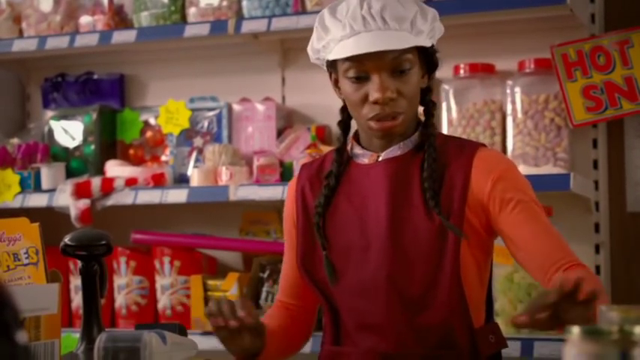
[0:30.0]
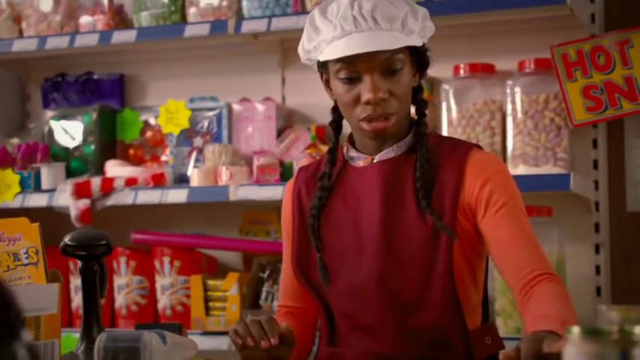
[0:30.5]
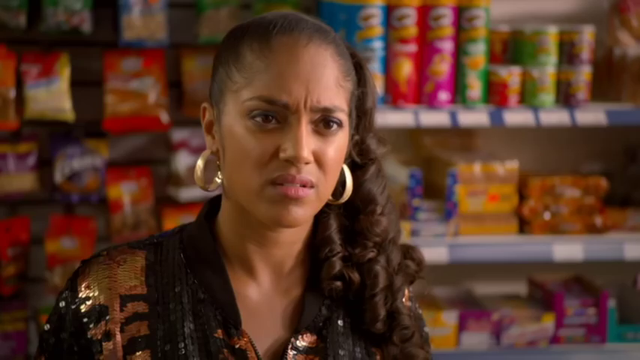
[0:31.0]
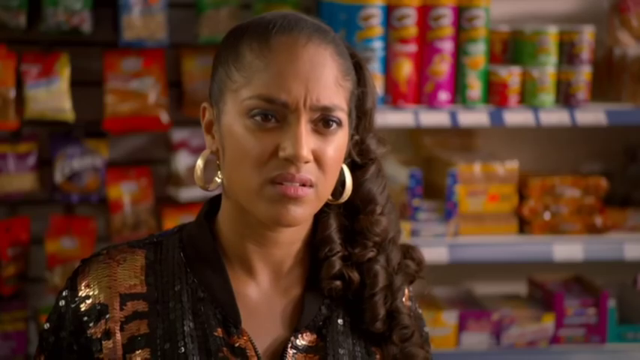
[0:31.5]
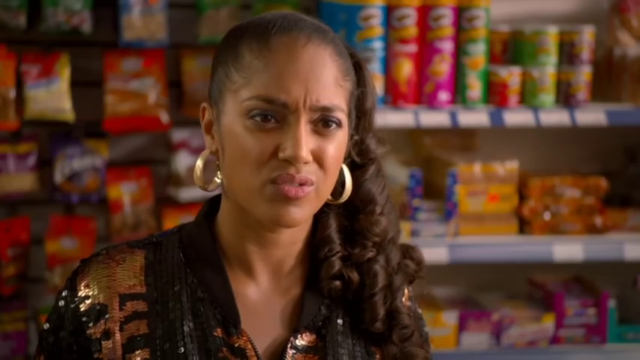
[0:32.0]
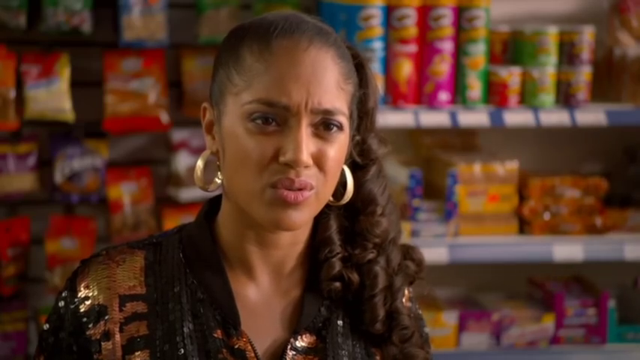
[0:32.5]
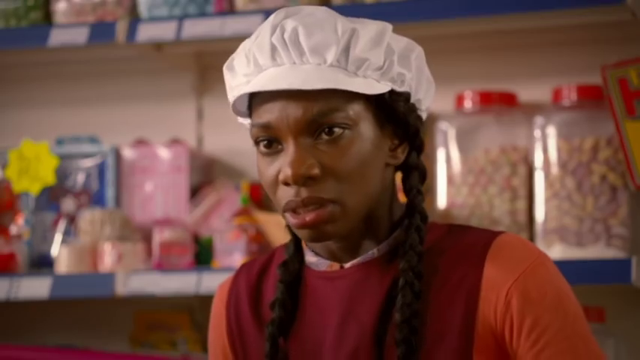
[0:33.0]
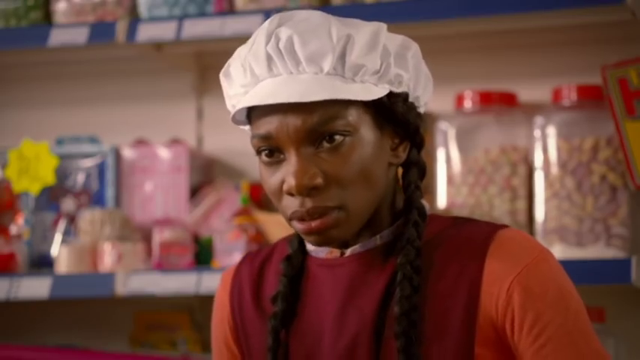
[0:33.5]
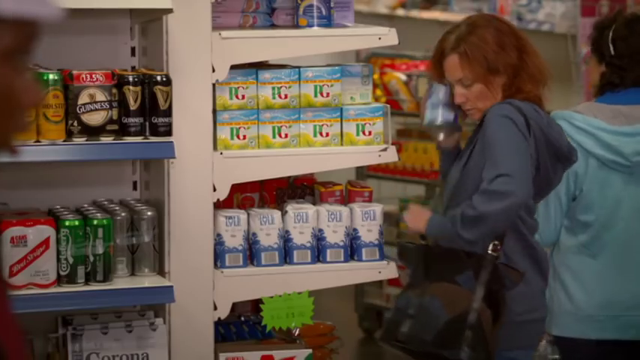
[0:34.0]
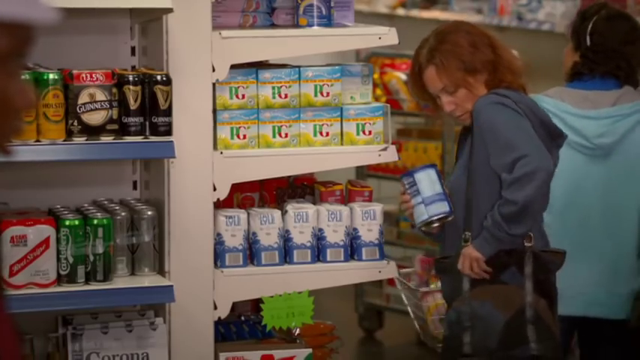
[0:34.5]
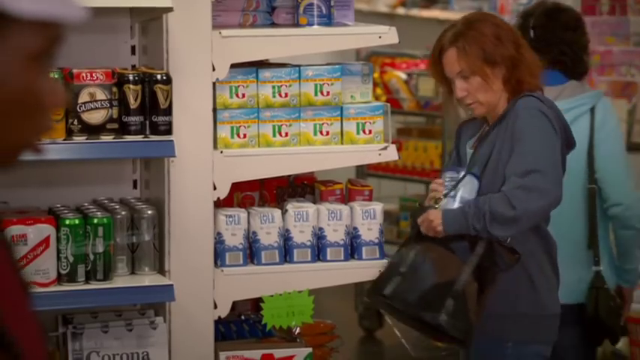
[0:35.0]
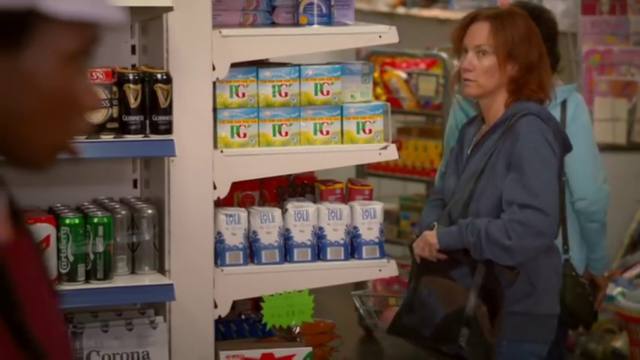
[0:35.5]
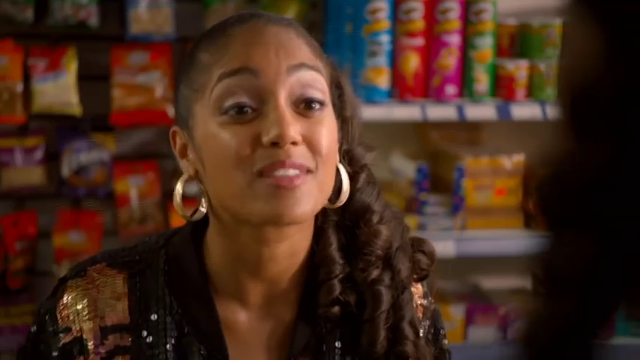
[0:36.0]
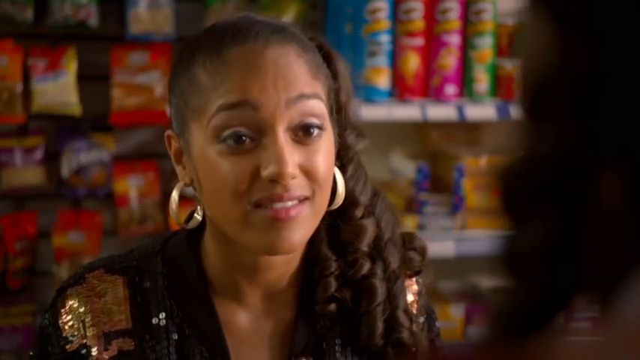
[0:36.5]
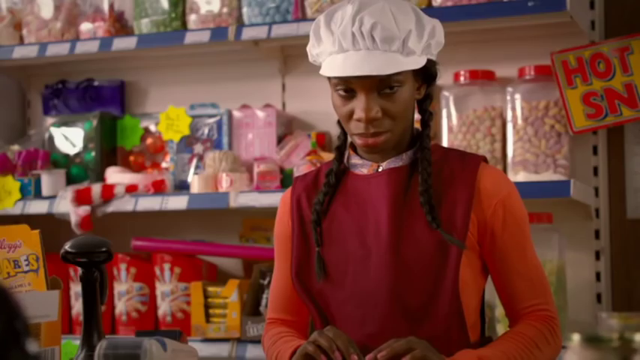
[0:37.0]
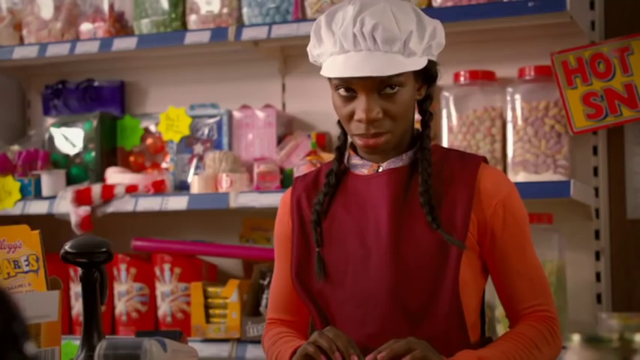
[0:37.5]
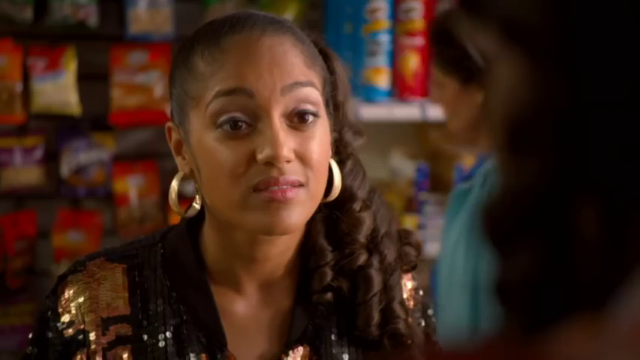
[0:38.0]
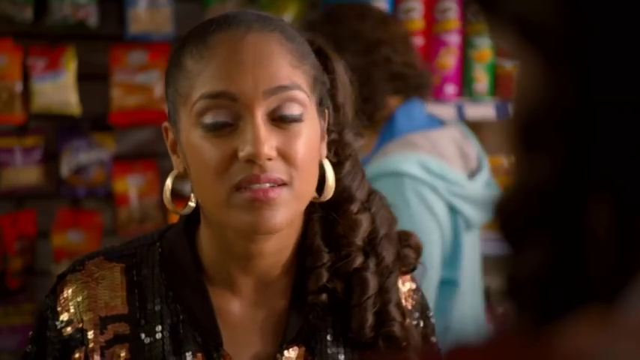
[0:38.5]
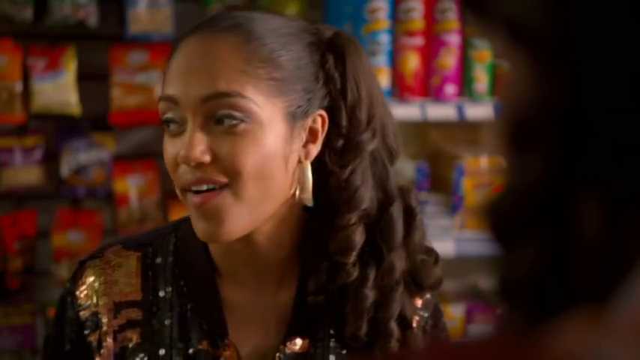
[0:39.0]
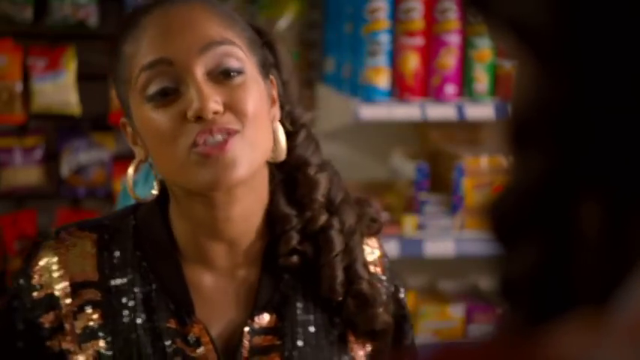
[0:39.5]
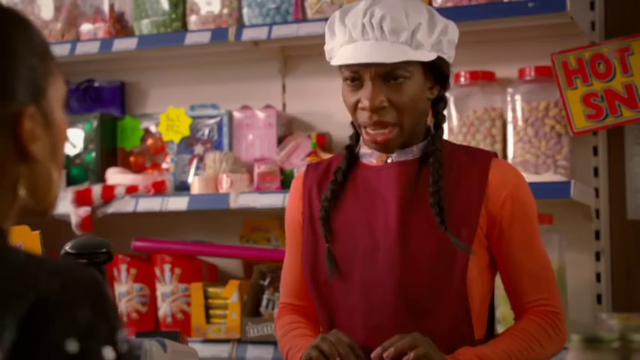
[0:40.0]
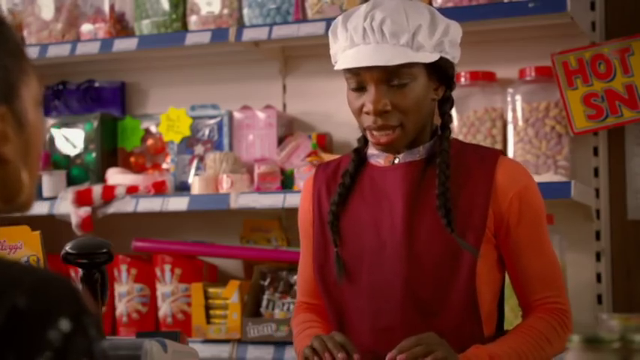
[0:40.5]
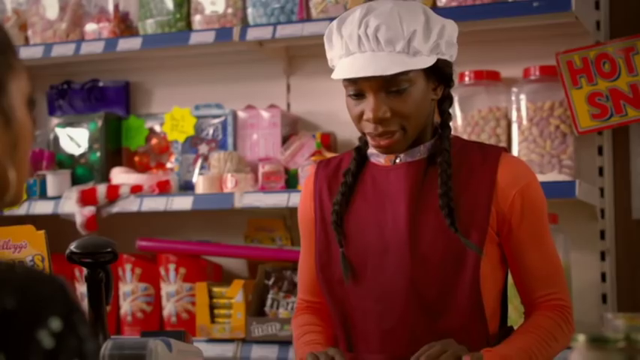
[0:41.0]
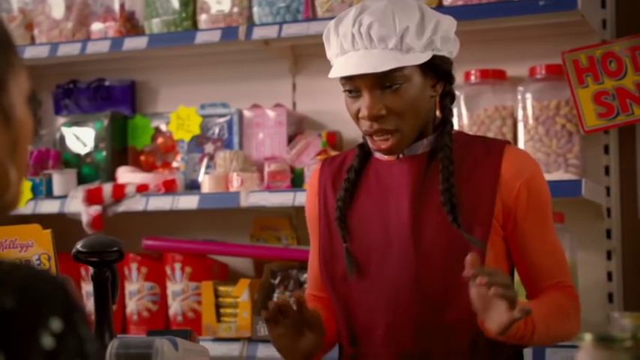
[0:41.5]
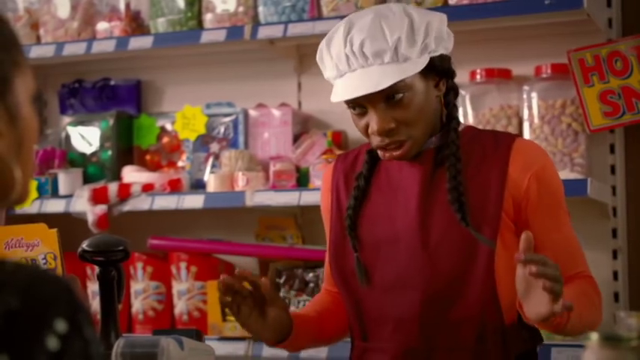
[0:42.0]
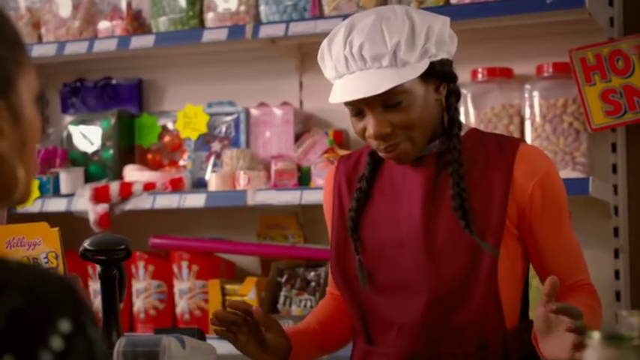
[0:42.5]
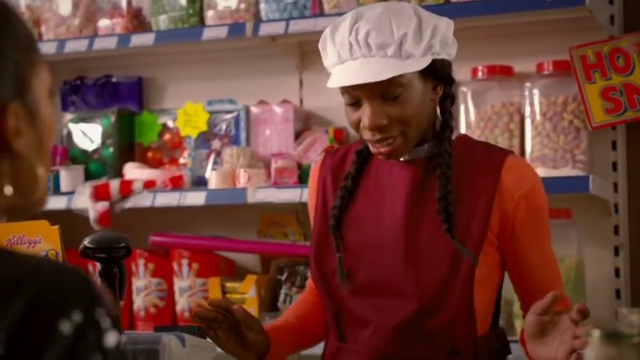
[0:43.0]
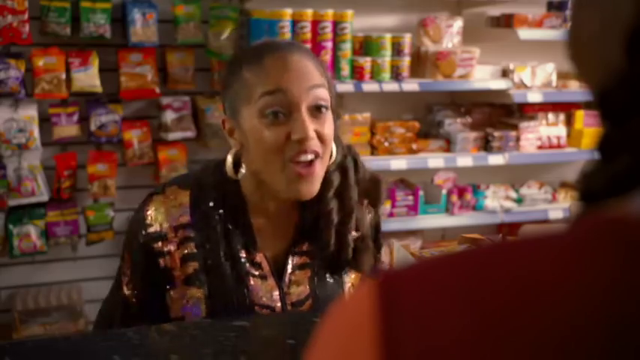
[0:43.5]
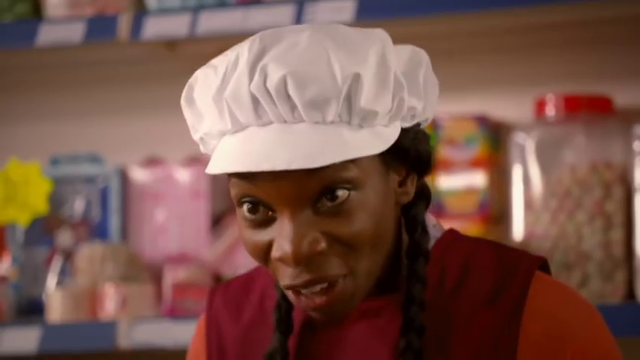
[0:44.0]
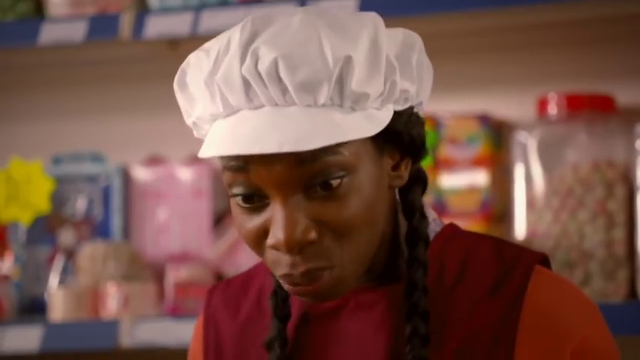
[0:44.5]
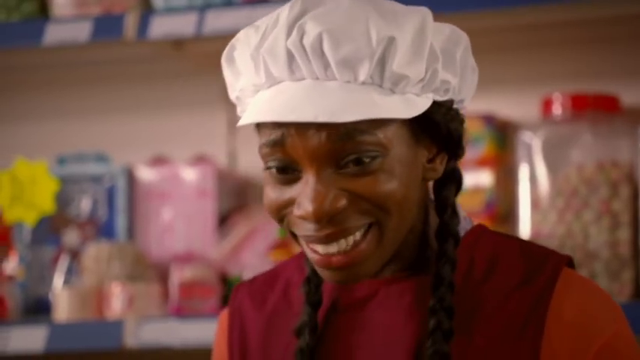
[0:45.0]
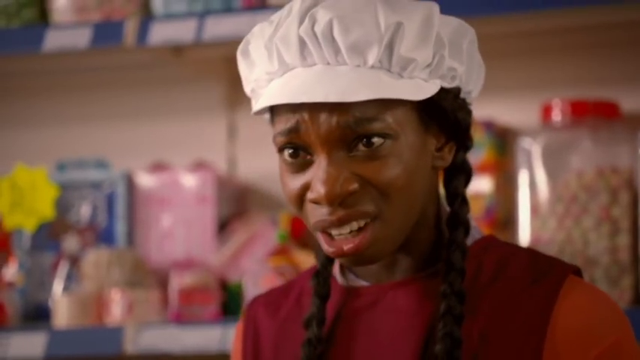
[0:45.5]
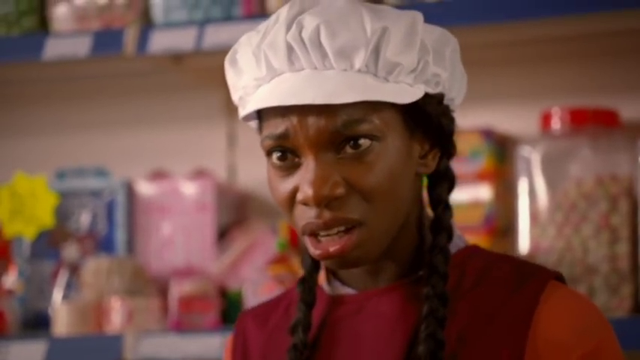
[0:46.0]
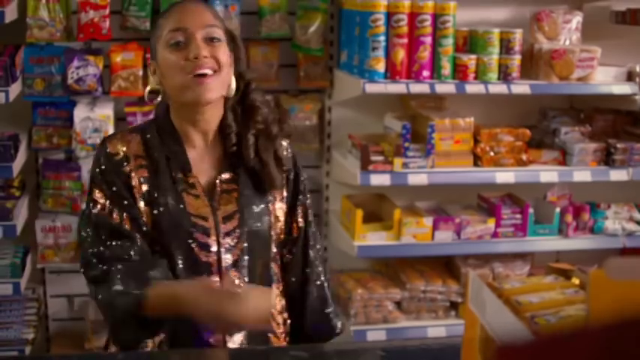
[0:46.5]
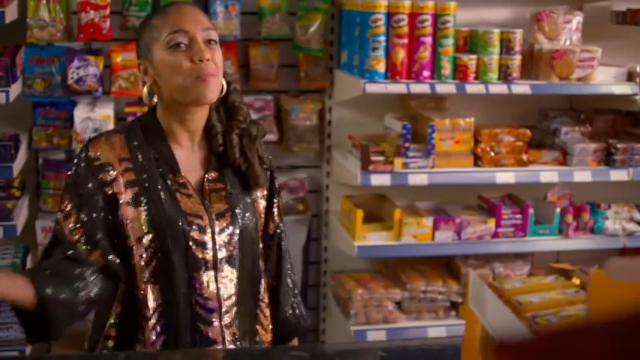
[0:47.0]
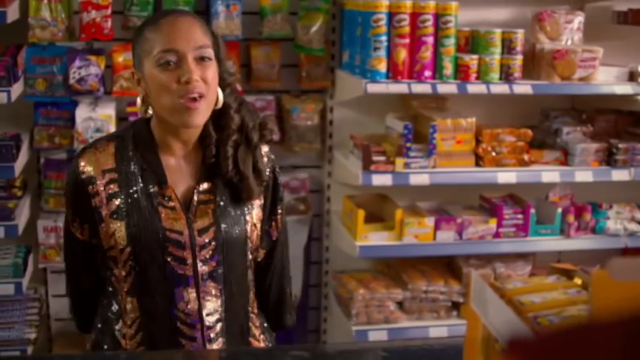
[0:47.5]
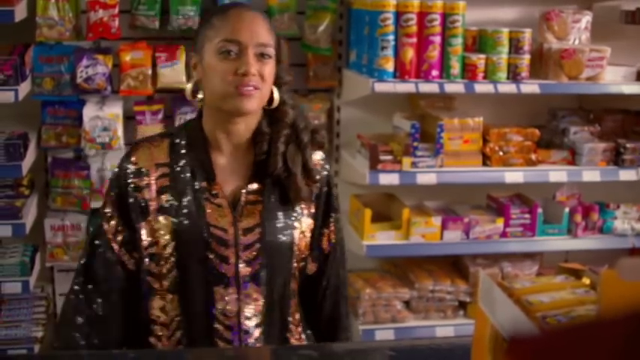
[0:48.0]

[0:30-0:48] A Black African-American woman in a white cap, with long black hair, an orange shirt and a red apron on top, is talking. As she talks, the video shows another woman, who is white, has brown hair, wears a blue jersey and holds a black handbag. This woman appears to take a tin can from the store and put it inside her bag. The video then shows the African-American woman in the white cap talking to another person with long black hair who wears a black and gold shirt; food parcels are behind this person. As they talk they both use hand gestures, and they look like they are arguing.